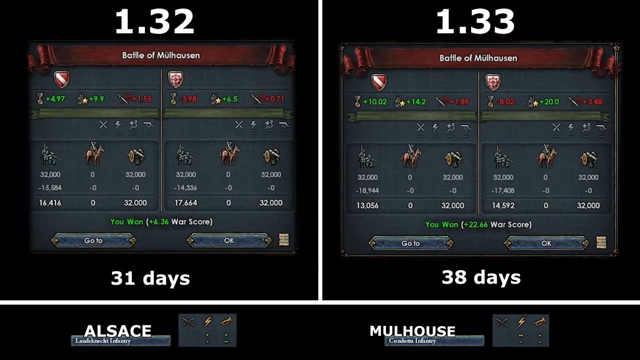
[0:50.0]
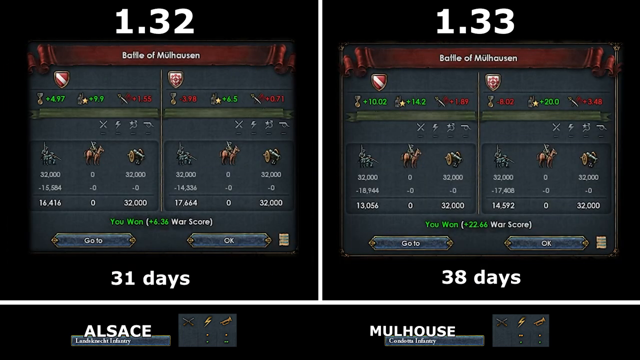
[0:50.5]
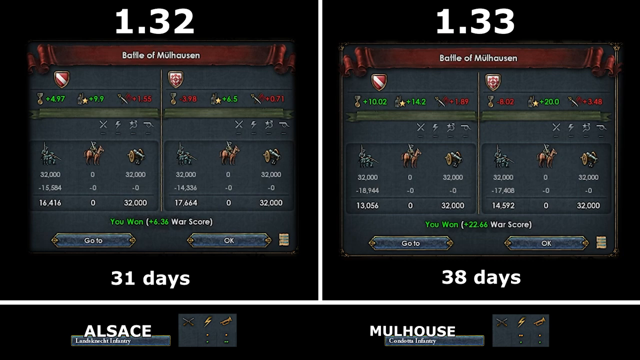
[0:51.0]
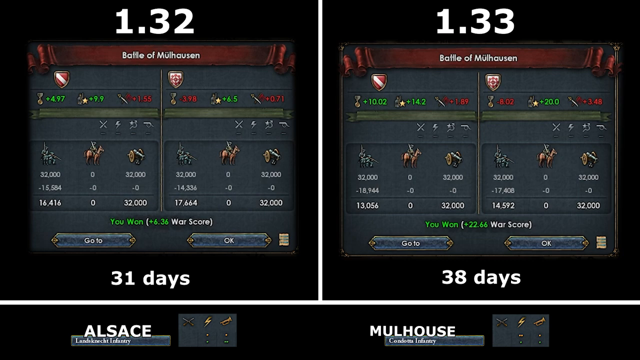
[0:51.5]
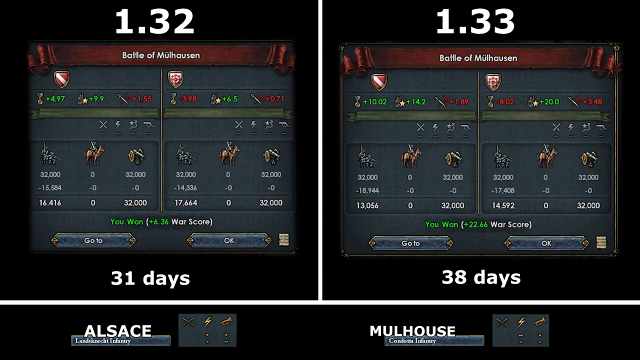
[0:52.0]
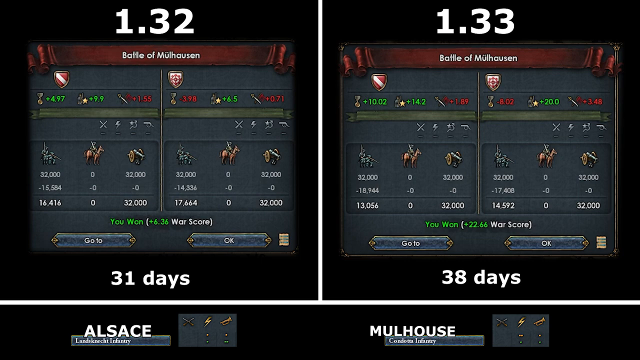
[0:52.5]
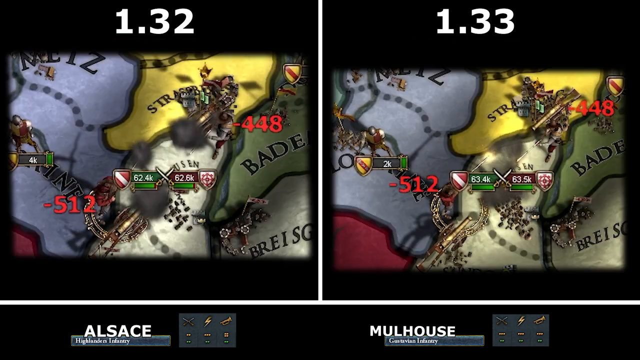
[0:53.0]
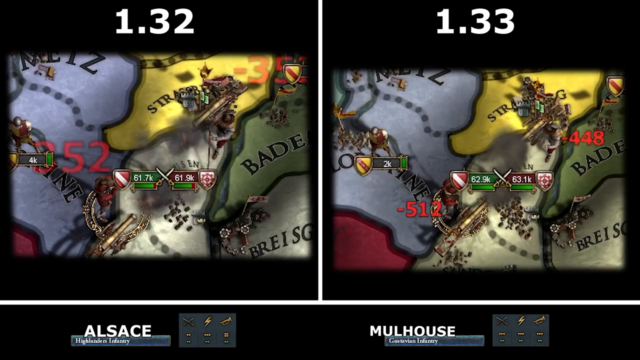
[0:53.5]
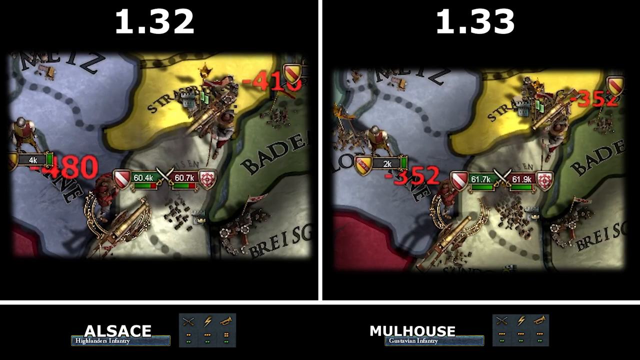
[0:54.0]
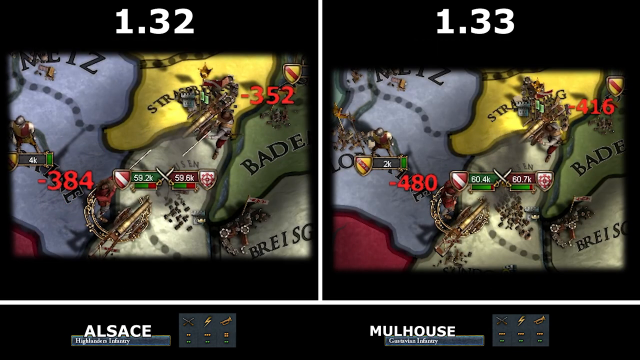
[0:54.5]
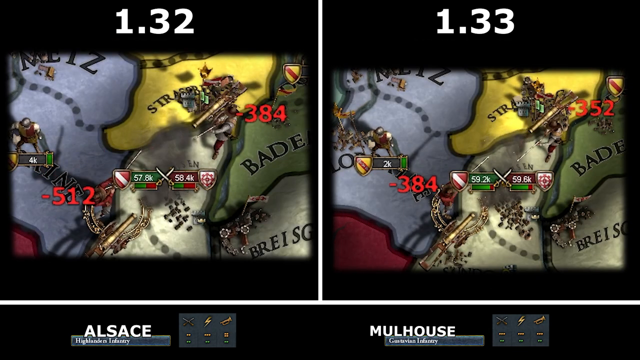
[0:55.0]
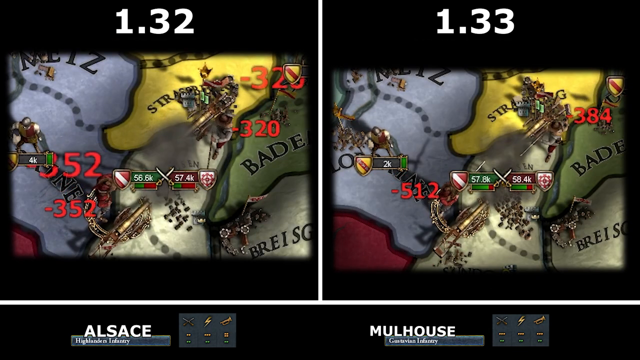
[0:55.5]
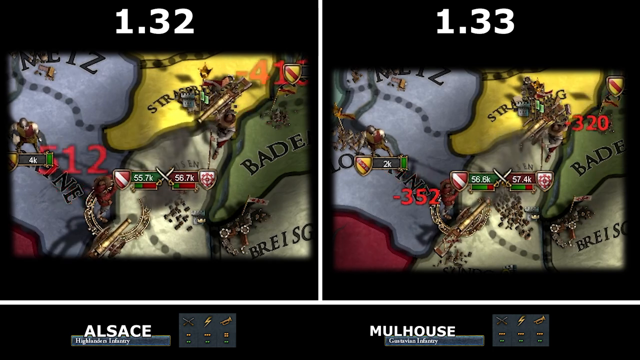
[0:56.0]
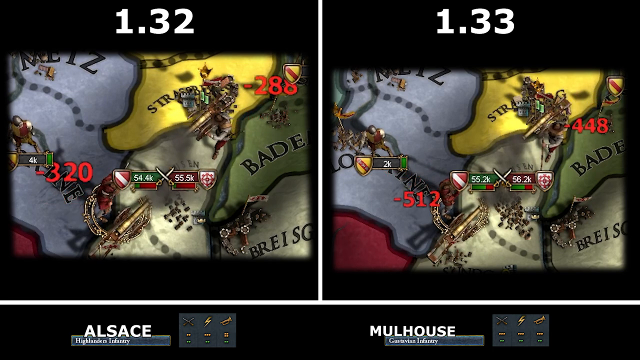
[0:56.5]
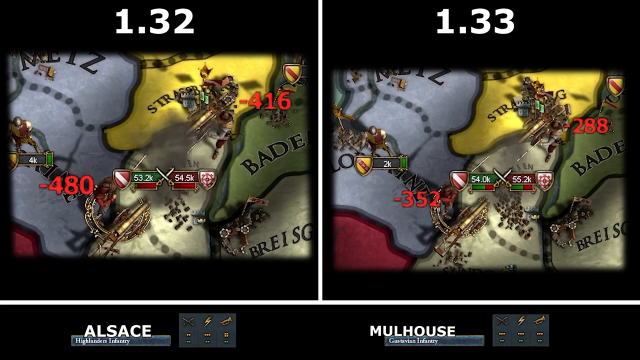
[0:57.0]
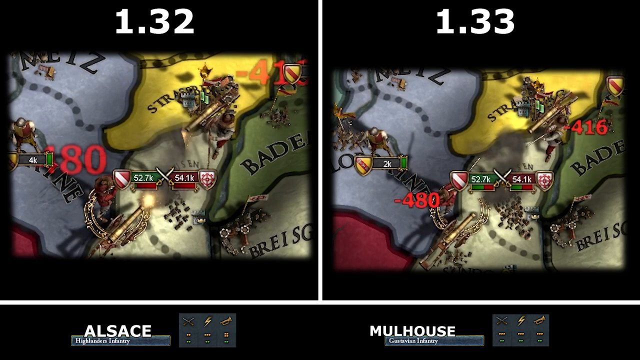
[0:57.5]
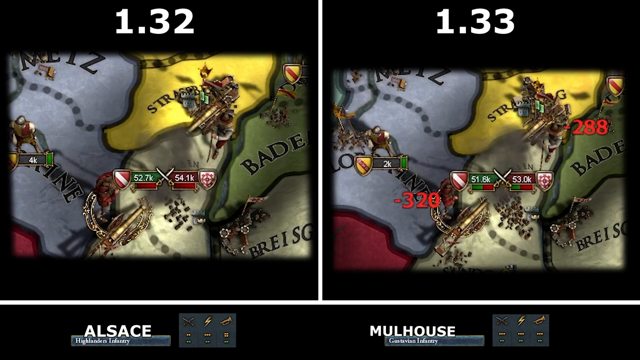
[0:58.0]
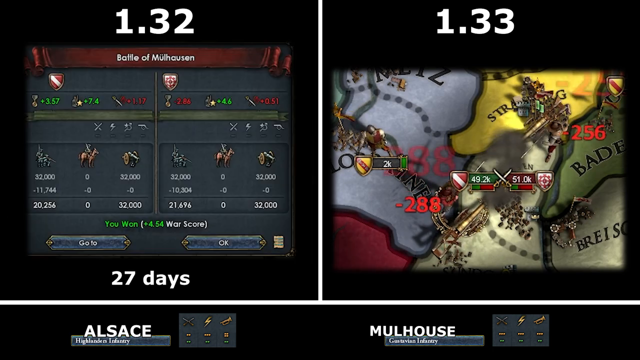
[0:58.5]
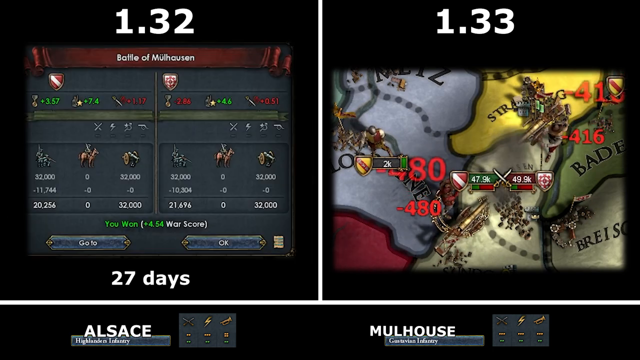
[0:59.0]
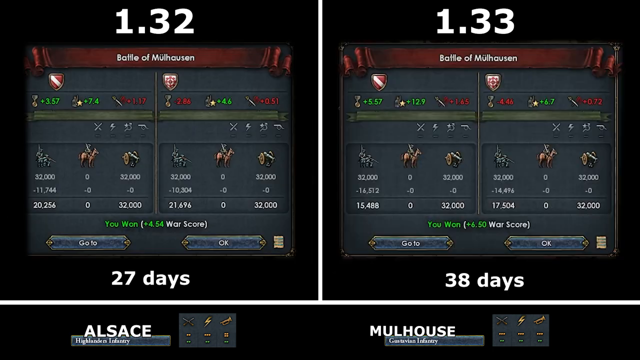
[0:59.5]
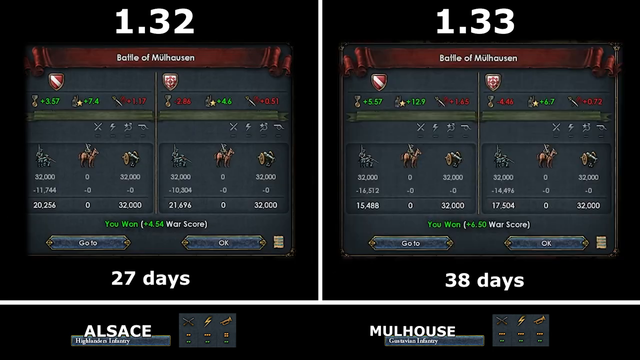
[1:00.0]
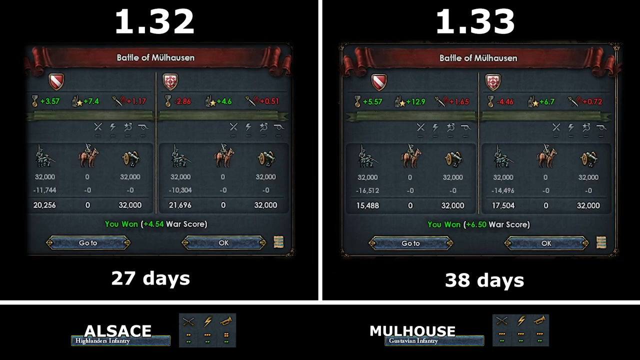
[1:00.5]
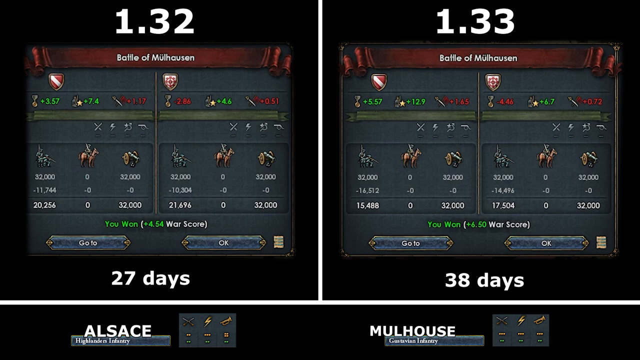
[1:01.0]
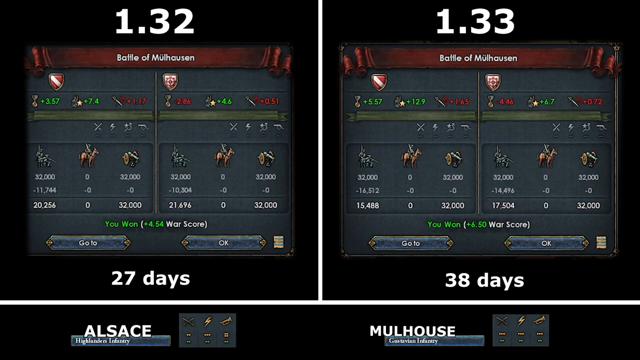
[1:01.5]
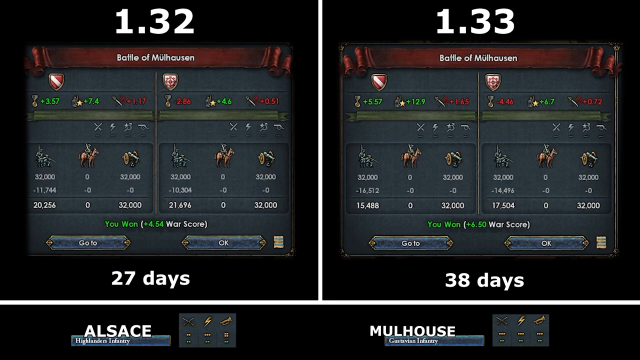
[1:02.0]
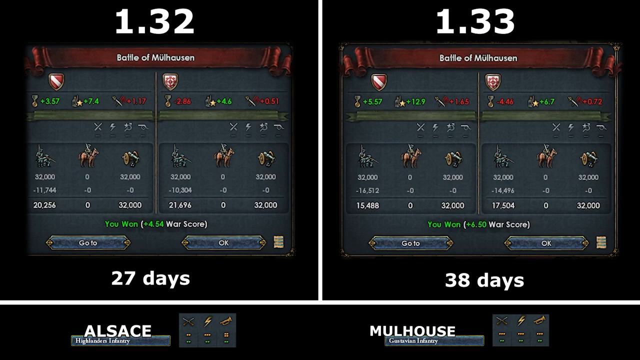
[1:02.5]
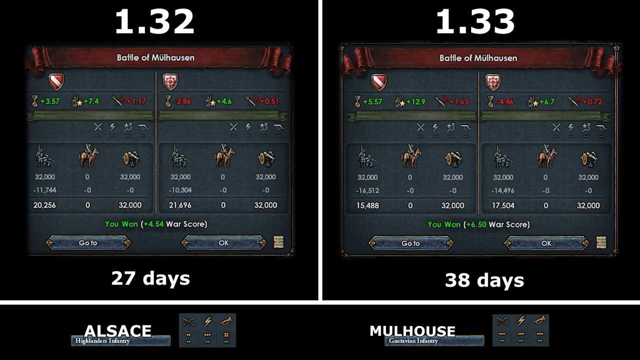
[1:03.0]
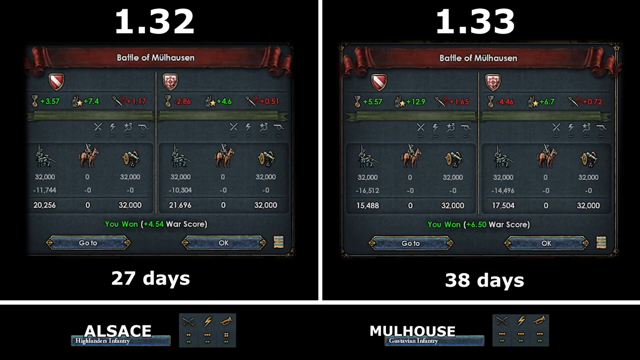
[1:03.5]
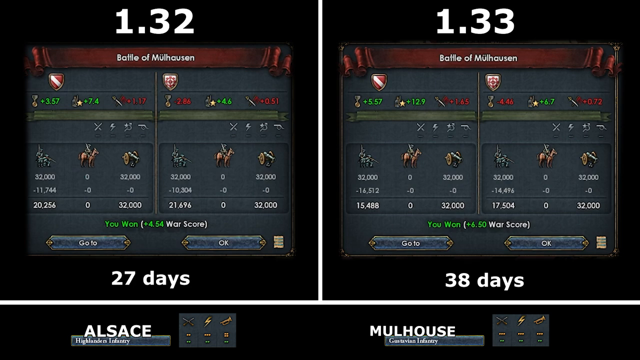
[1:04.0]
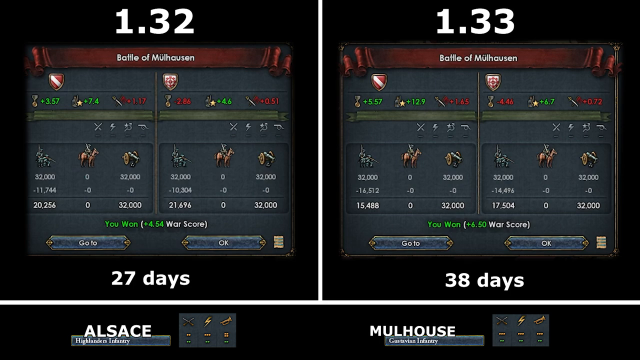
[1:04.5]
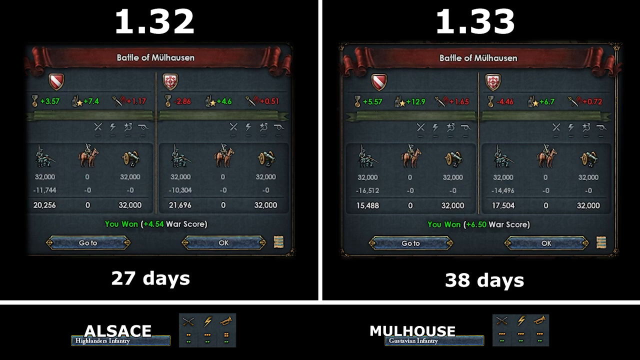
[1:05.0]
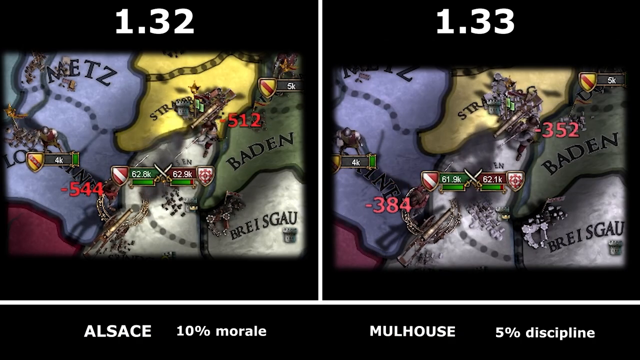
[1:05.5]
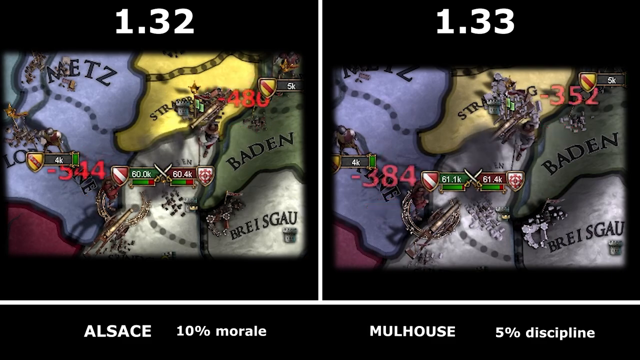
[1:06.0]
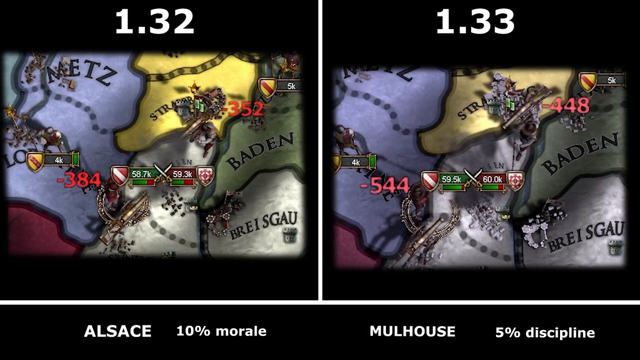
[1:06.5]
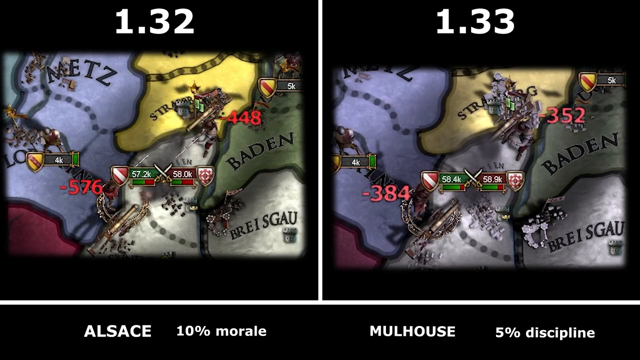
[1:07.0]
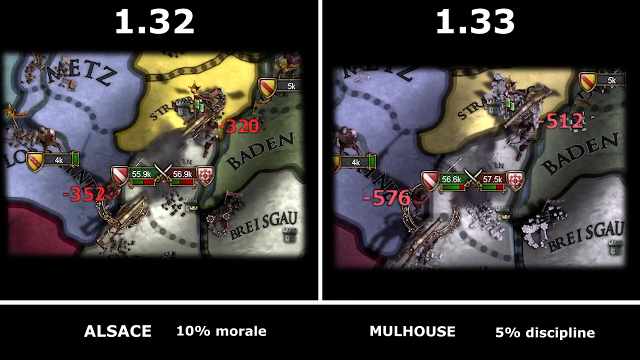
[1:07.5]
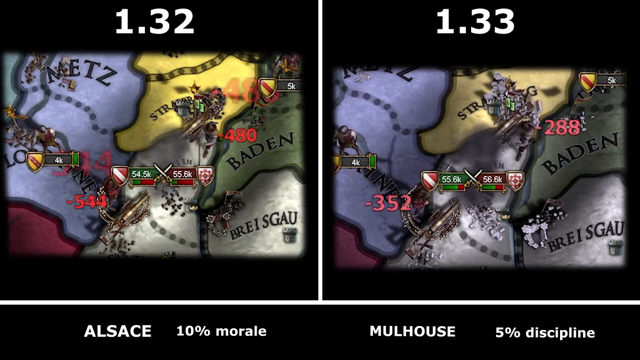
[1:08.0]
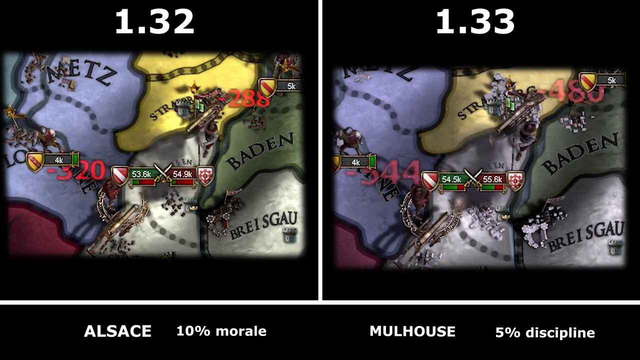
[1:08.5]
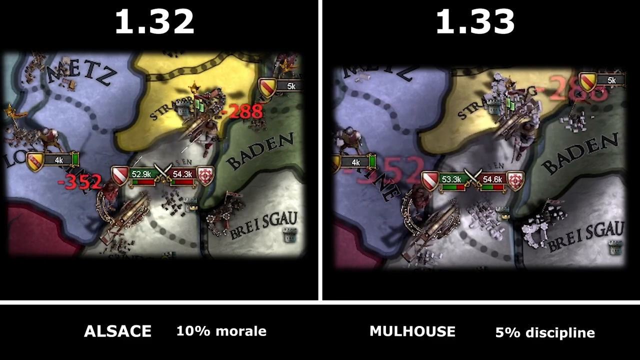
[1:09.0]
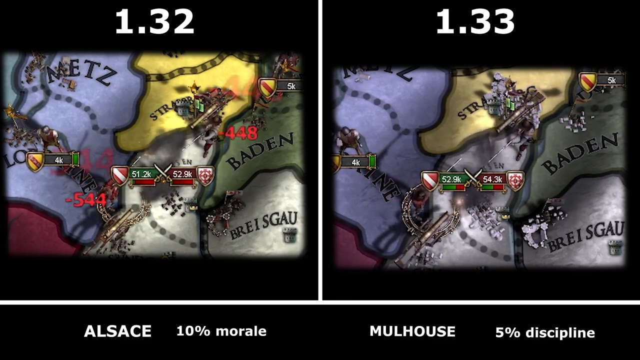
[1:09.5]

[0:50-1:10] The view goes back to the maps. In the center of both are two text boxes with shields on the outside and two crossed swords in the middle. The battles appear to be fought with cannons. When the screen changes, the left side changes first, followed by the right, now showing "27 days" on the left and "38 days" on the right. There also seems to be a difference in infantry between Alsace and Mulhouse. Back on the maps, Alsace shows 10% morale and Mulhouse shows a different level of morale. The menu screens also show small images, apparently of a horse and a cannon, and the left one possibly of a group of soldiers; it is on a dark background and cannot be fully seen.